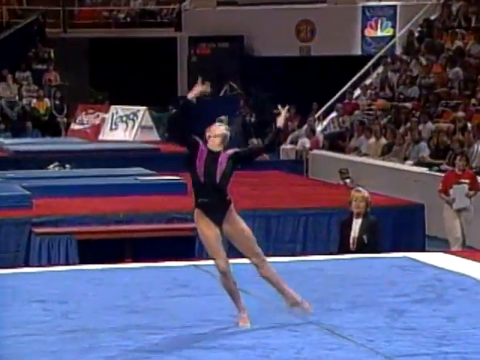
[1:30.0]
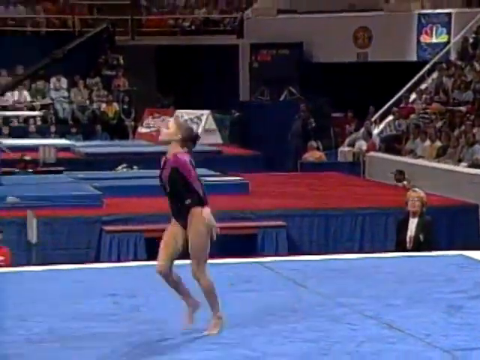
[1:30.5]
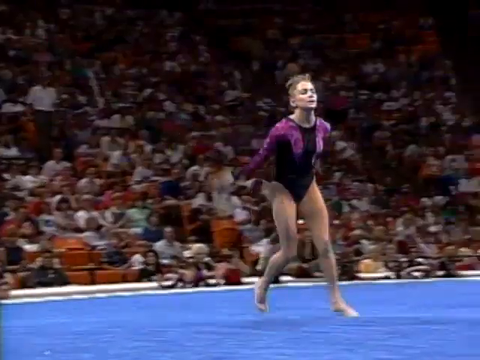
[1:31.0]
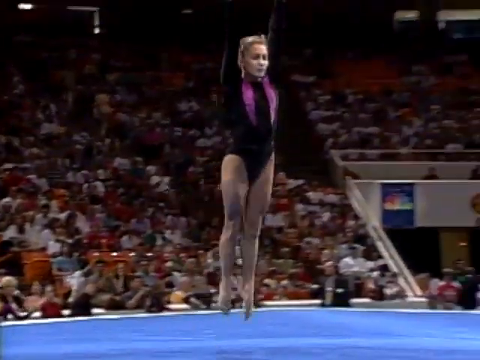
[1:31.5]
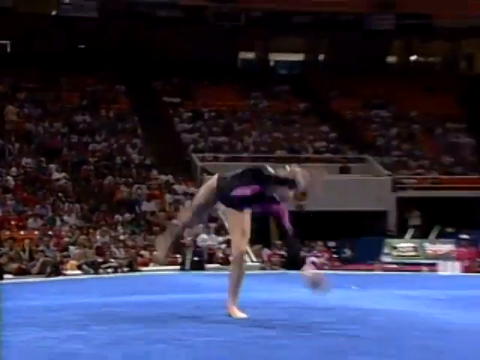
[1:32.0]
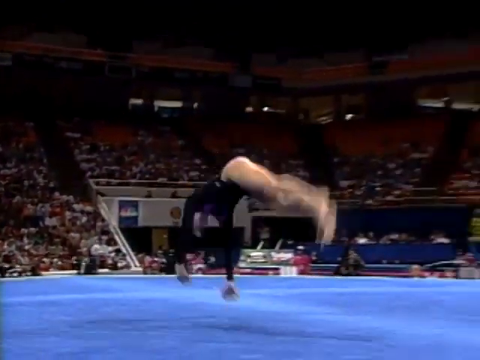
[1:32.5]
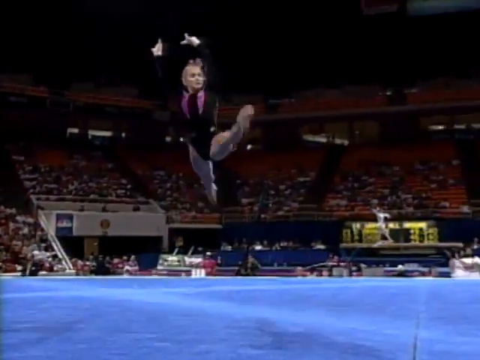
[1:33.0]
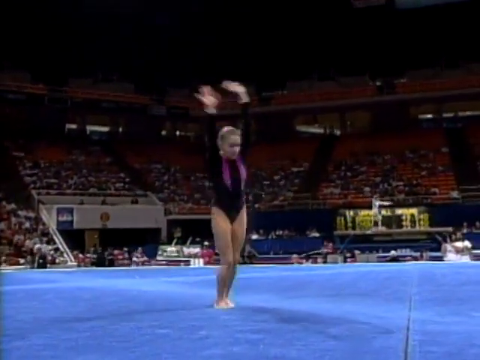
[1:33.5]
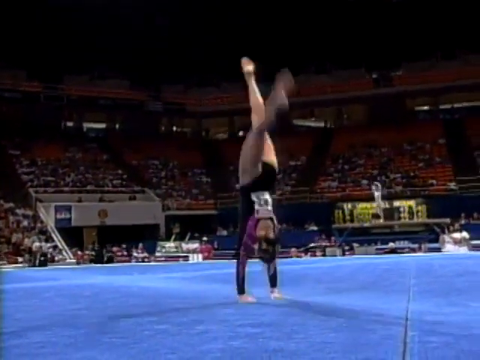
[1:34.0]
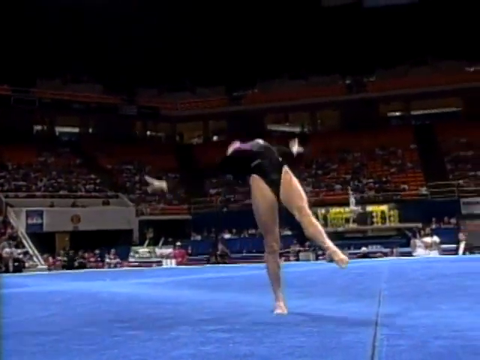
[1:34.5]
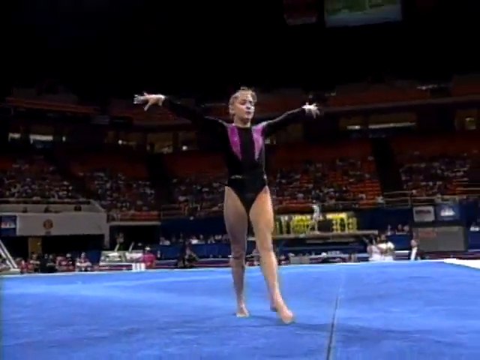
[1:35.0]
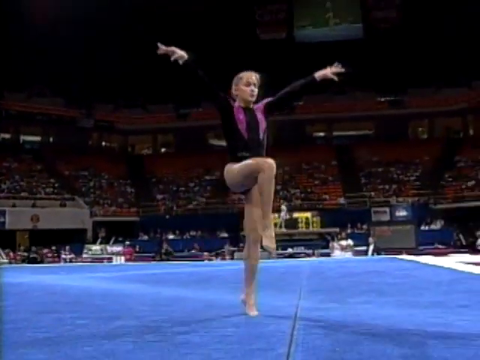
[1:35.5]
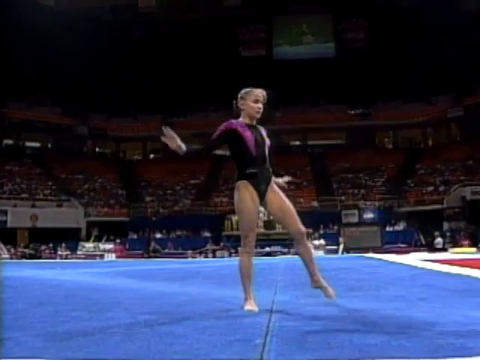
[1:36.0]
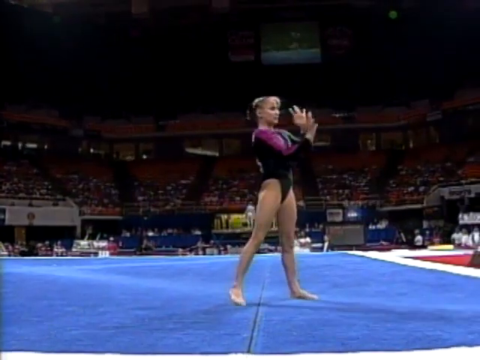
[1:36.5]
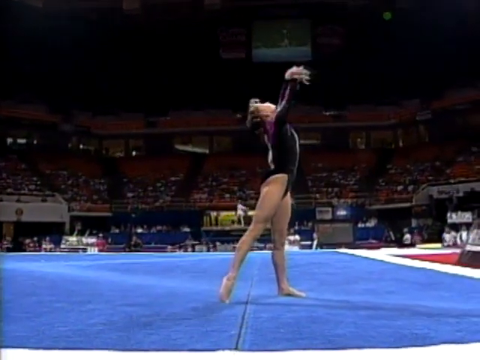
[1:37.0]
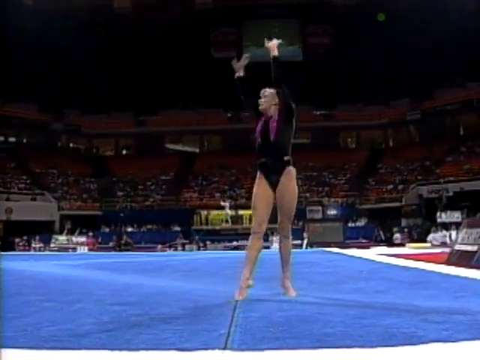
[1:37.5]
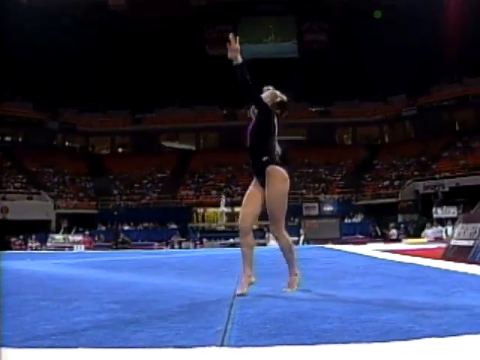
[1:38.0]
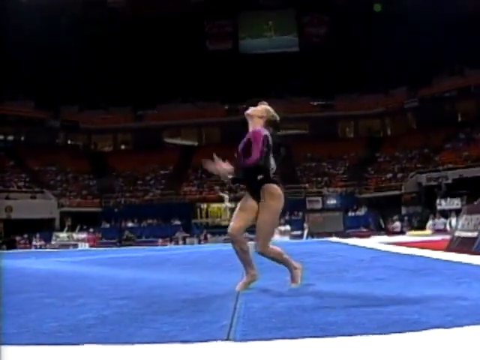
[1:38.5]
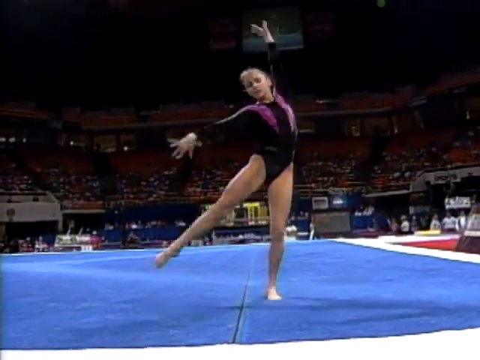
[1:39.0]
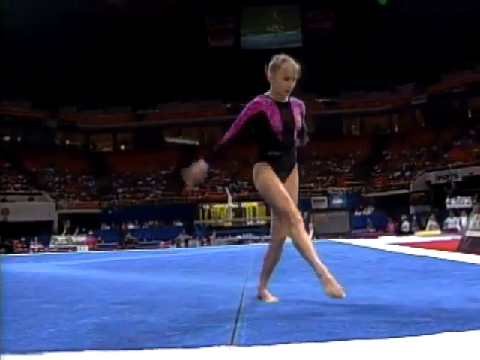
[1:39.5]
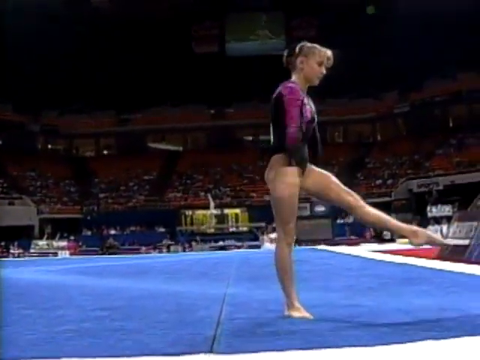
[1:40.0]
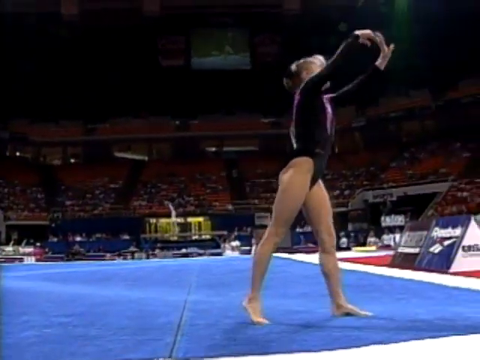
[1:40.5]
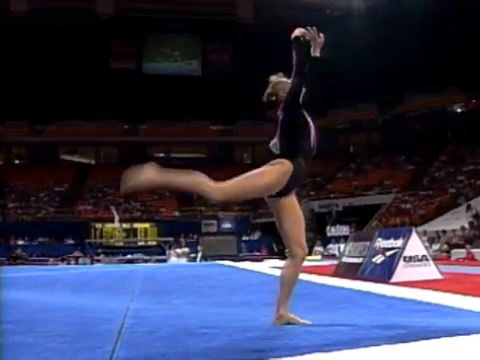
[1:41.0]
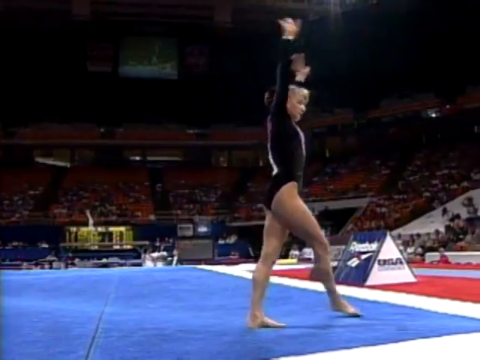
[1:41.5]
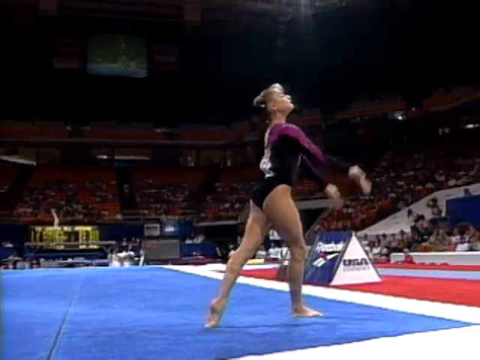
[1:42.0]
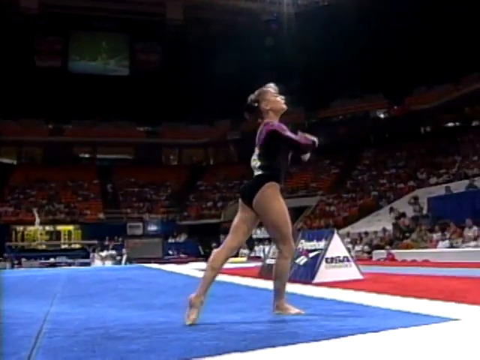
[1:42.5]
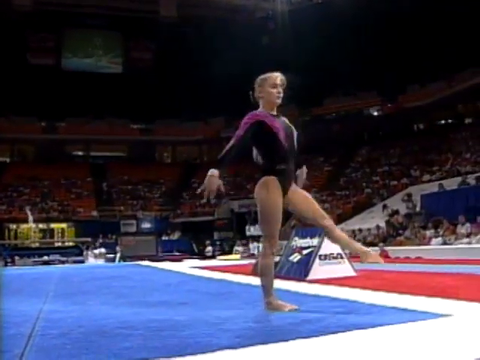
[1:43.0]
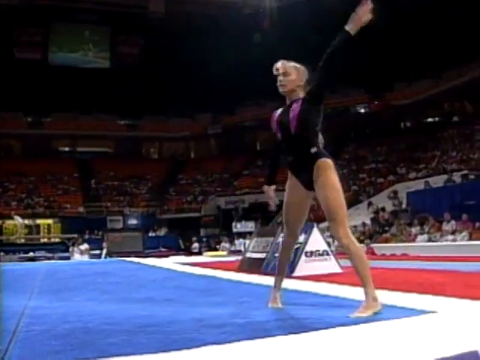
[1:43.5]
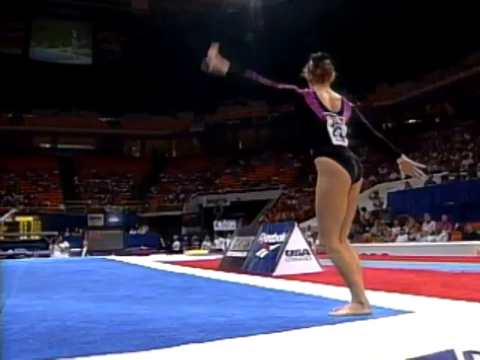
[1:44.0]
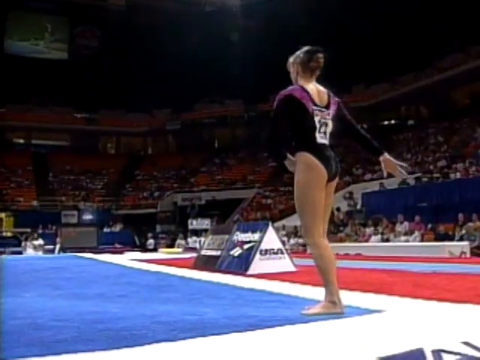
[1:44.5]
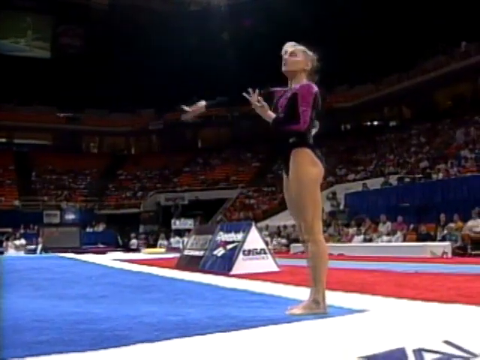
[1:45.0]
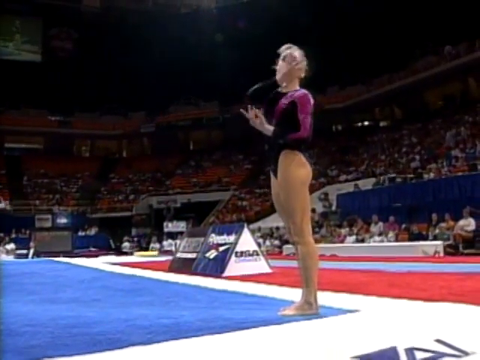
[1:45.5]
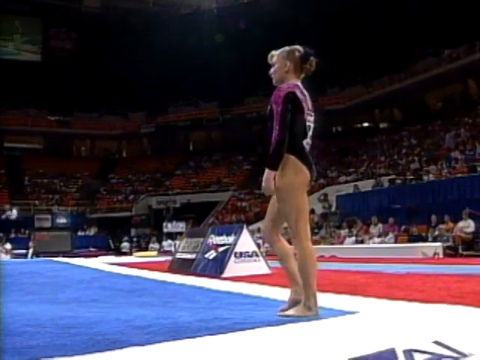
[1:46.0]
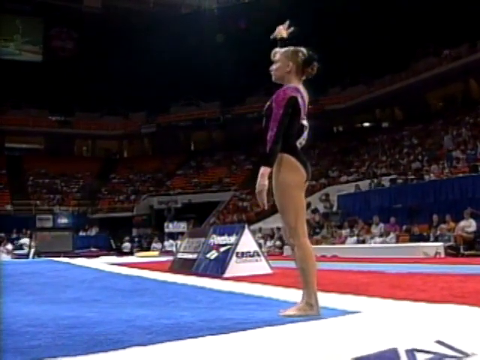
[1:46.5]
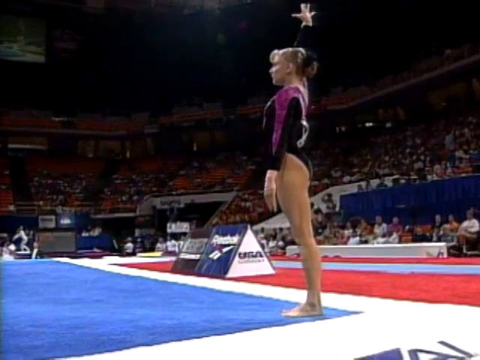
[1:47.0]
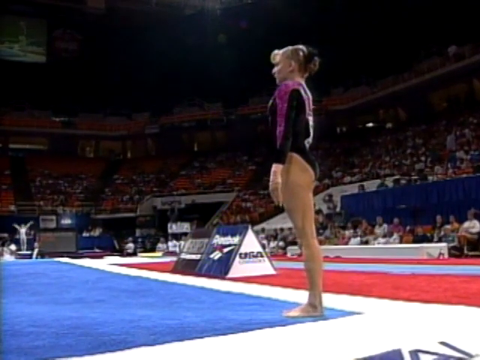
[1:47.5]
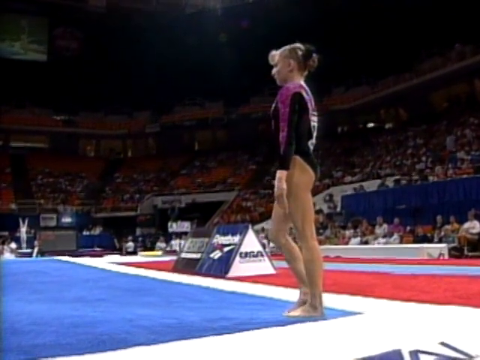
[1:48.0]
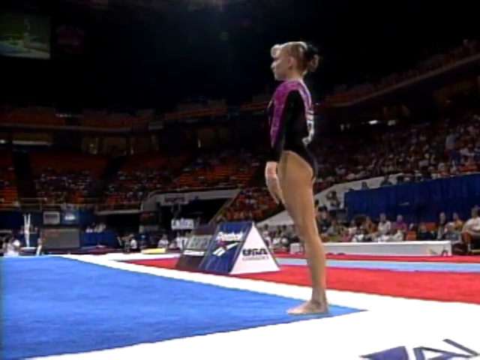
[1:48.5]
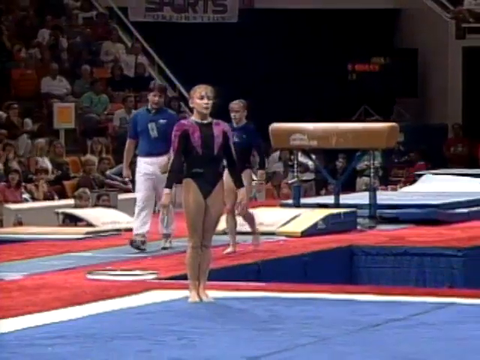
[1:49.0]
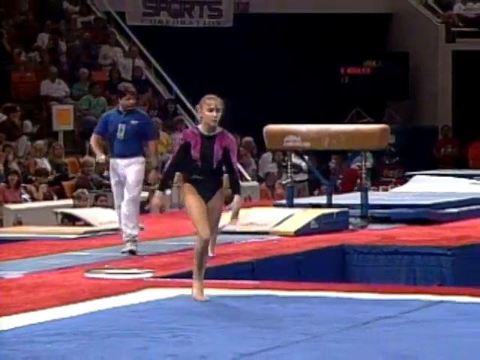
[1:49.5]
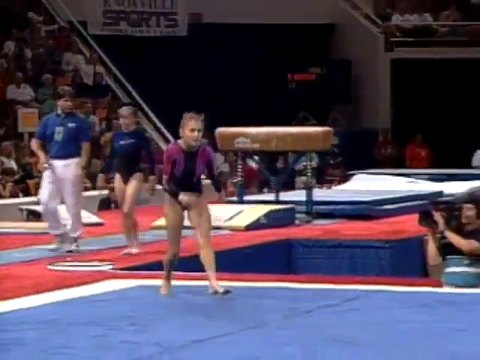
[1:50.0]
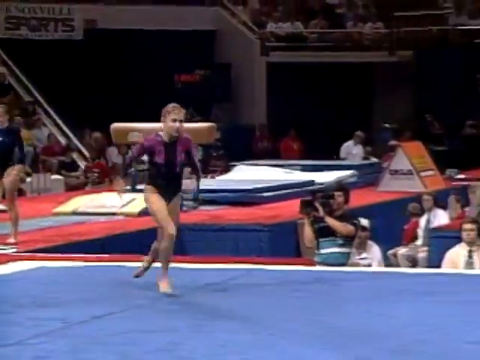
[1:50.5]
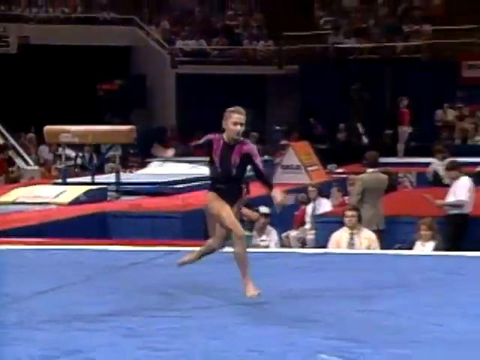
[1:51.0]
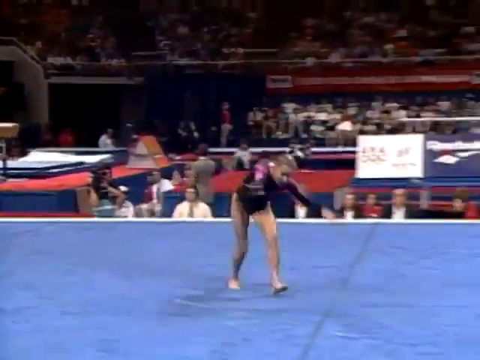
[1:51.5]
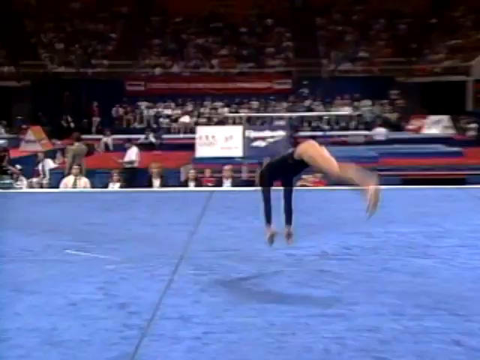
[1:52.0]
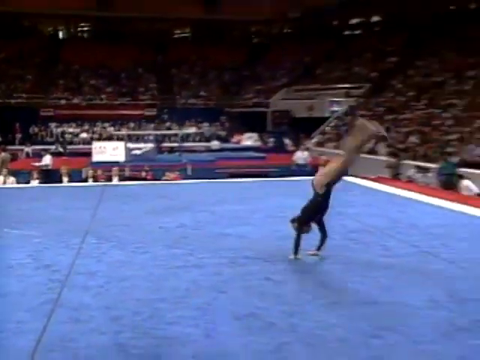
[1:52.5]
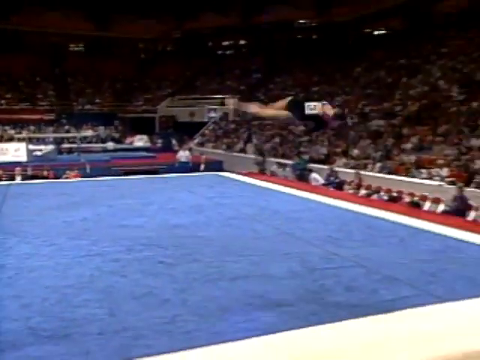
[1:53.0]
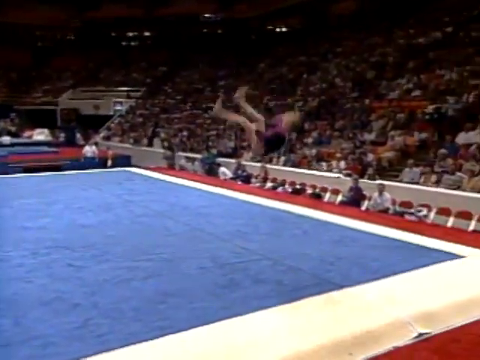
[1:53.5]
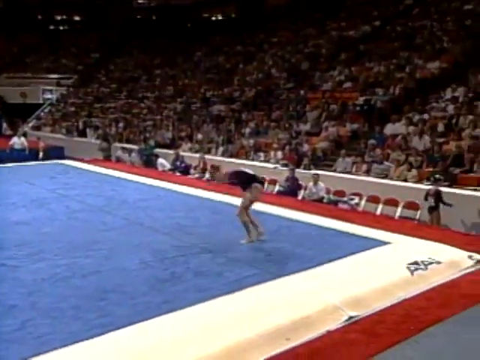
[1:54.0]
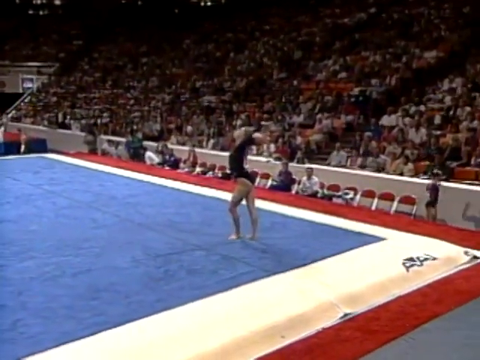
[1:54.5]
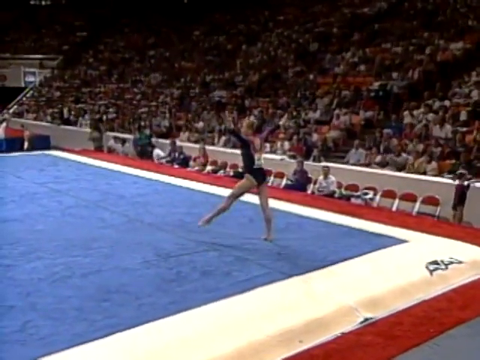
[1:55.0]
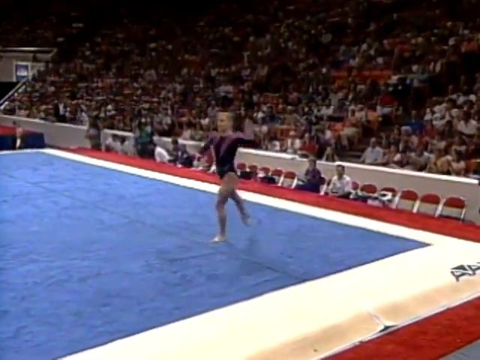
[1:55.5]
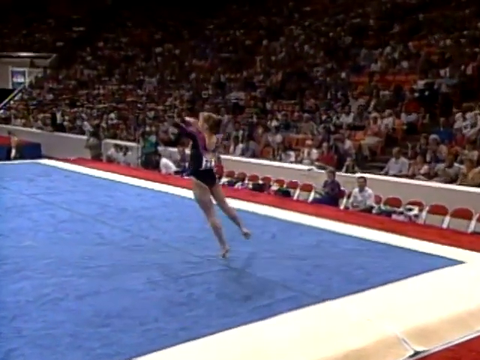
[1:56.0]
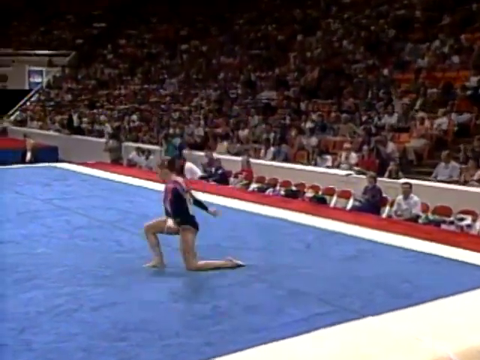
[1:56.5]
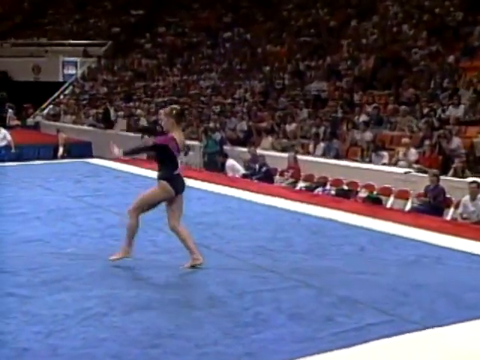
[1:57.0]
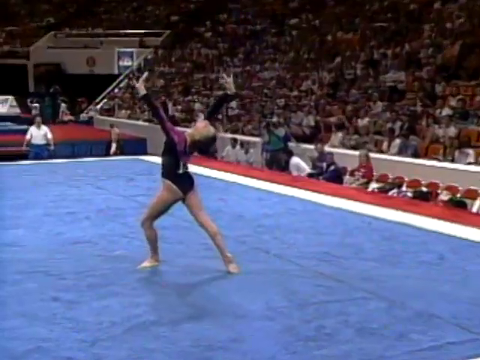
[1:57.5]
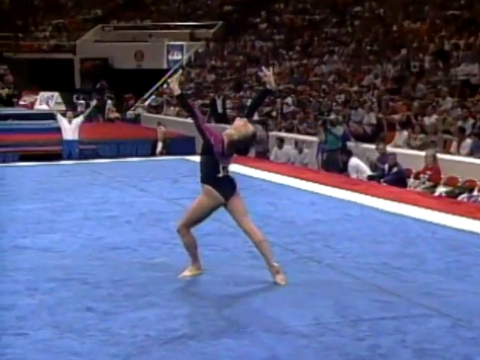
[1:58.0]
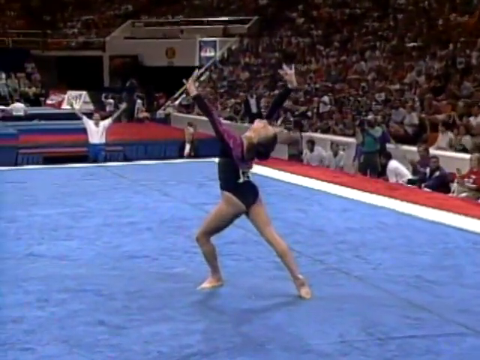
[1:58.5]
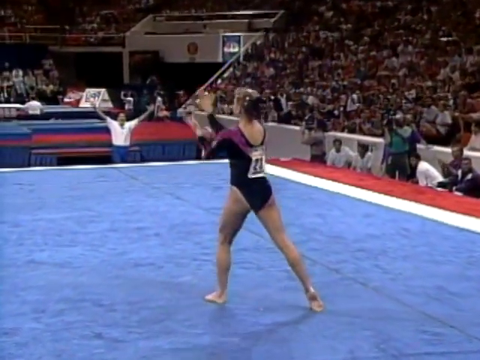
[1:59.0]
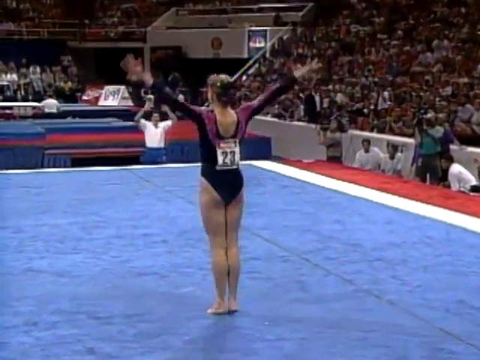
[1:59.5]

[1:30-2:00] This appears to be a gymnastics competition from the mid to late 90s. A gymnast in a black leotard with some purple at the top appears to be performing a routine on a big blue mat with a thick white outline. The NBC logo is on a banner in the back, along with ads for Coca-Cola and Legs. Lots of people fill the stands, and it looks like a fairly popular event. The gymnast dances around the mat, does some cartwheels into a handspring, another handspring and a front flip. Toward the corner of the mat she strikes poses and dances, kicking a leg up and moving her arms. She gets in the corner, puts her hands up and gets ready for what appears to be another trick. She starts forward, does a handspring, a flip and another flip, lands, then kneels and strikes more poses until she apparently ends her routine.